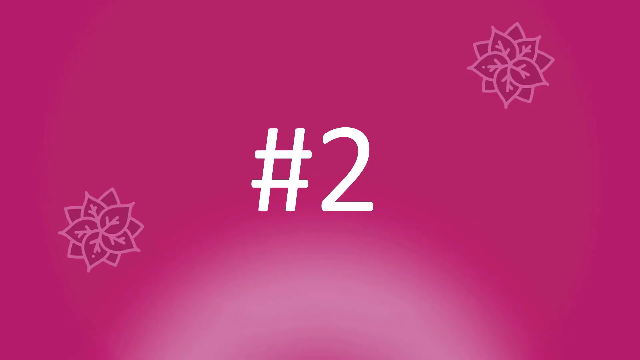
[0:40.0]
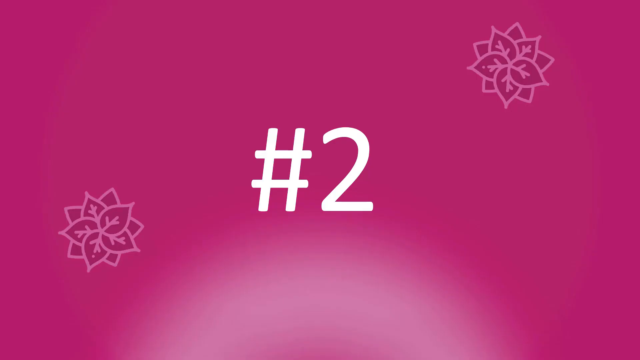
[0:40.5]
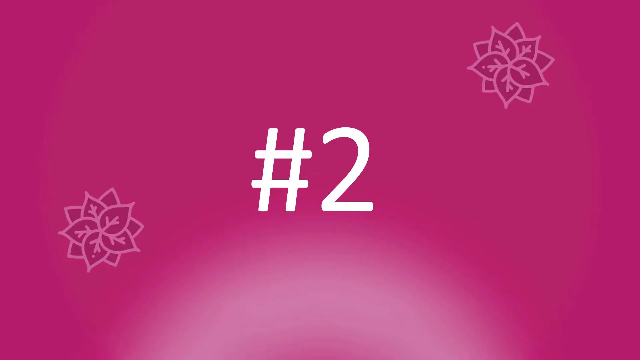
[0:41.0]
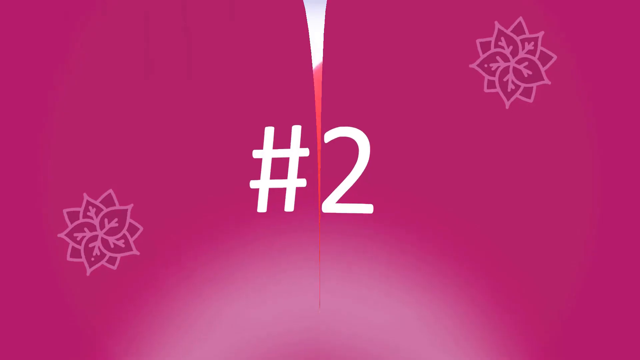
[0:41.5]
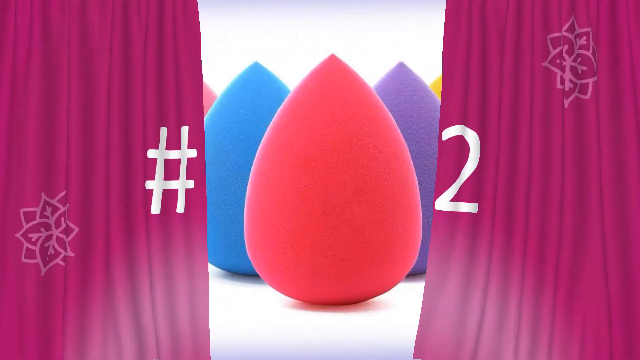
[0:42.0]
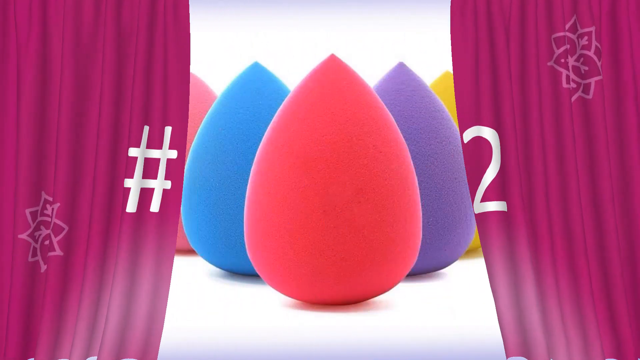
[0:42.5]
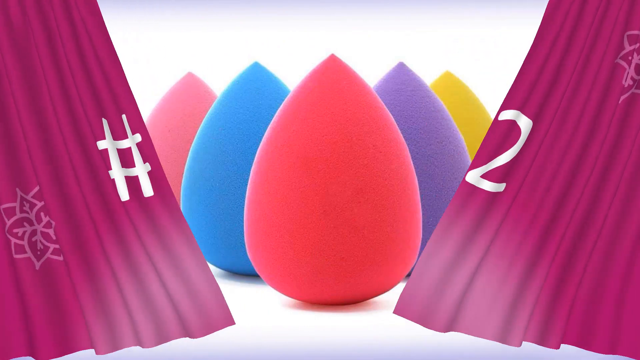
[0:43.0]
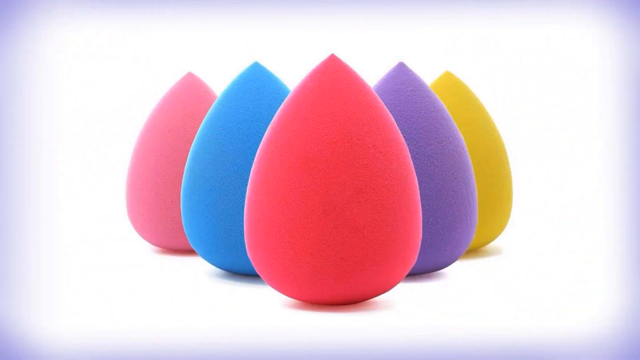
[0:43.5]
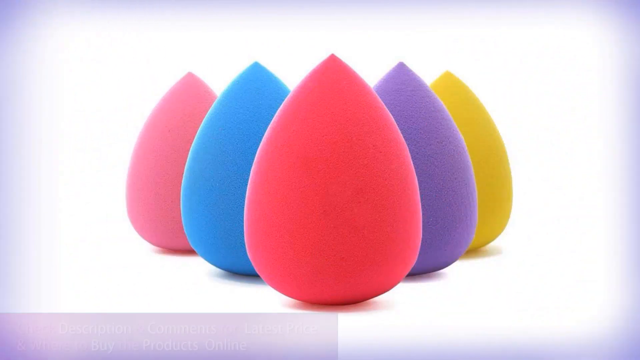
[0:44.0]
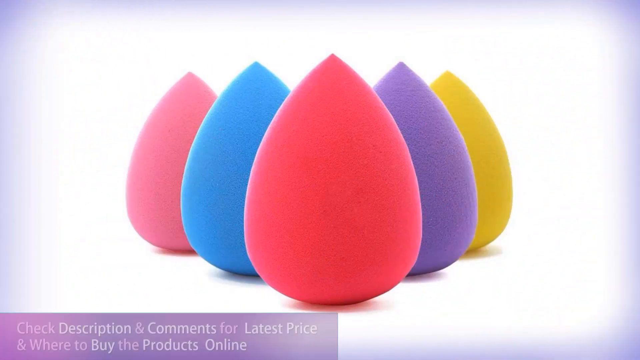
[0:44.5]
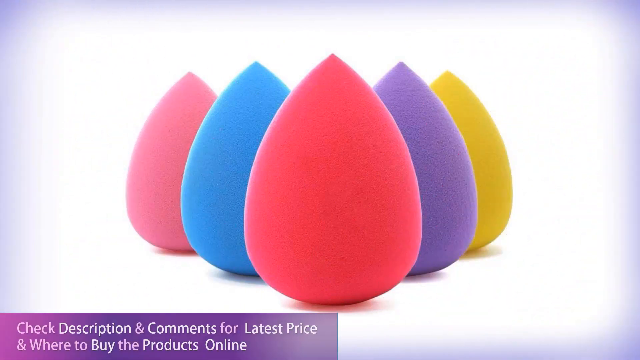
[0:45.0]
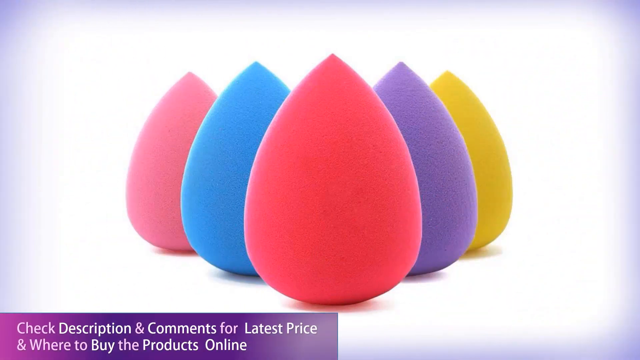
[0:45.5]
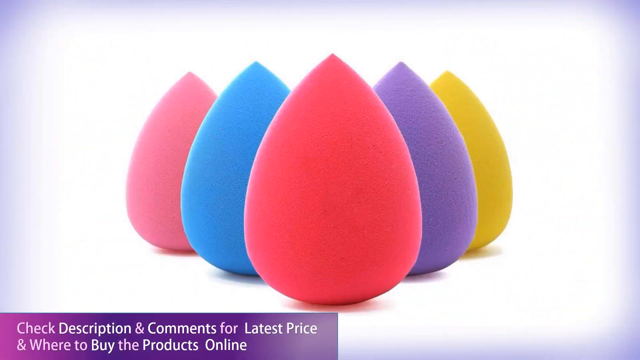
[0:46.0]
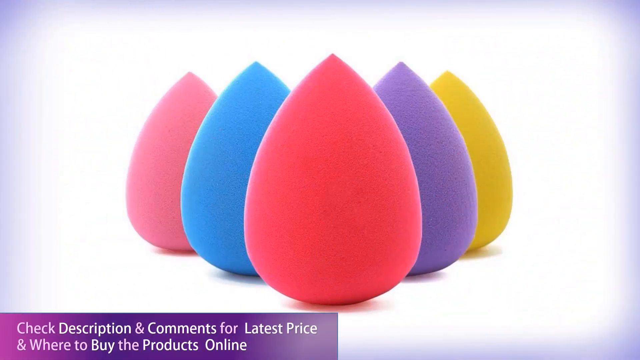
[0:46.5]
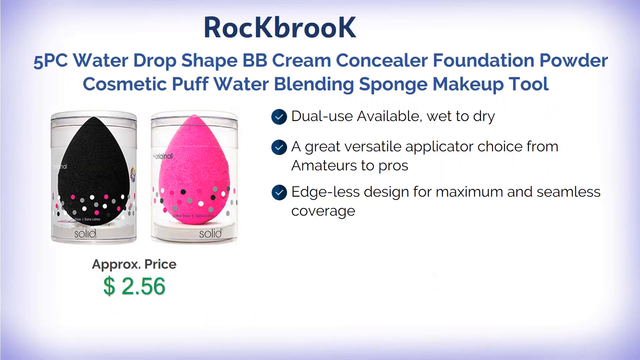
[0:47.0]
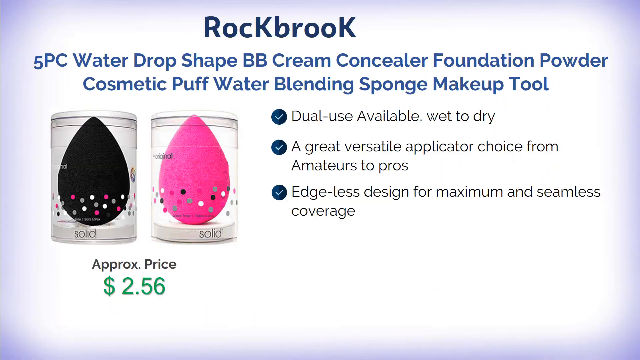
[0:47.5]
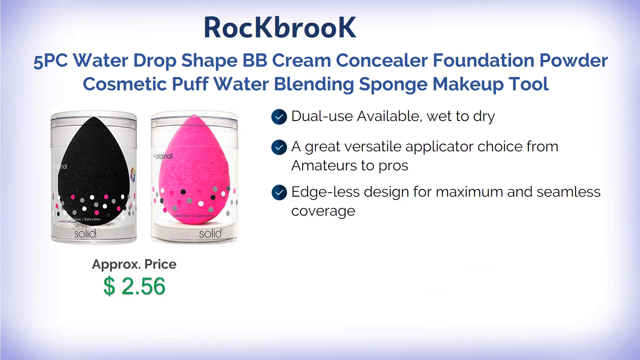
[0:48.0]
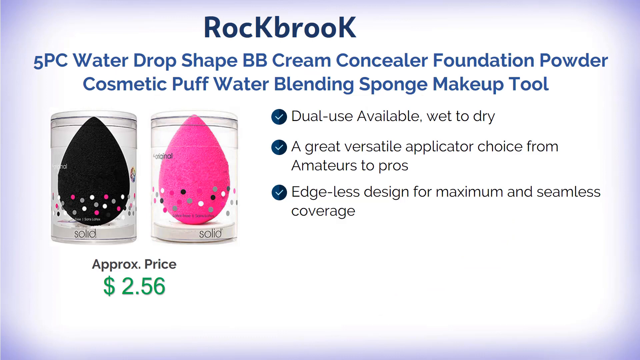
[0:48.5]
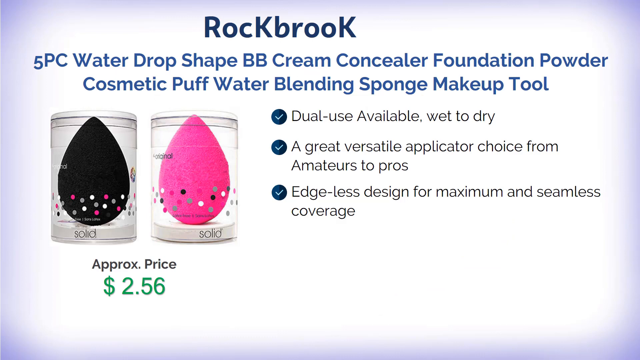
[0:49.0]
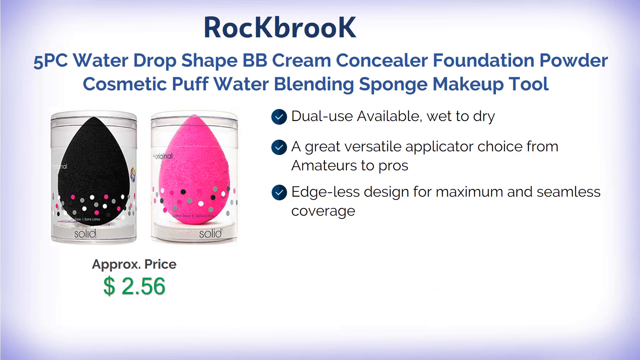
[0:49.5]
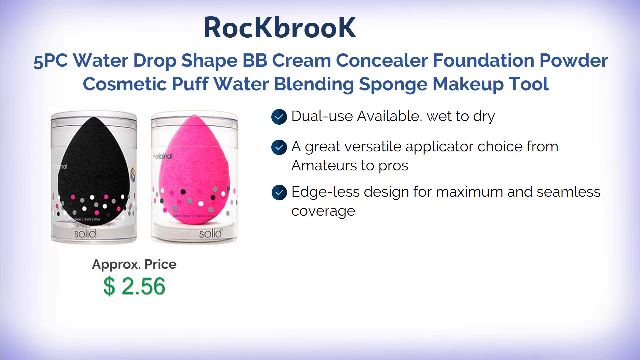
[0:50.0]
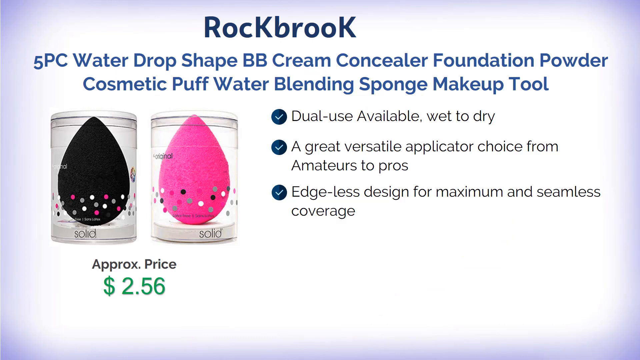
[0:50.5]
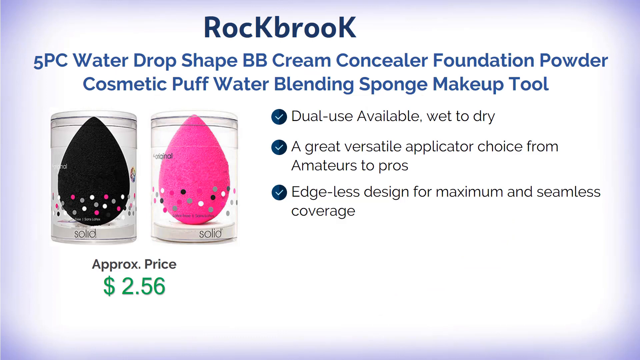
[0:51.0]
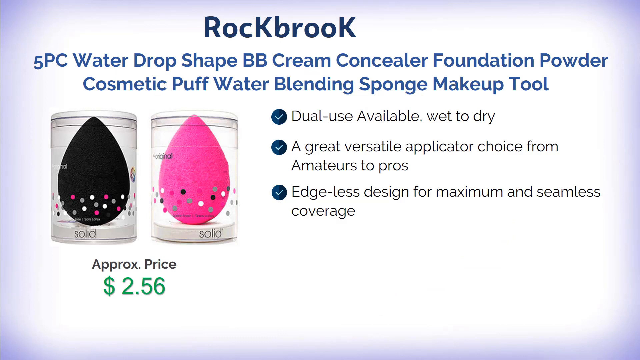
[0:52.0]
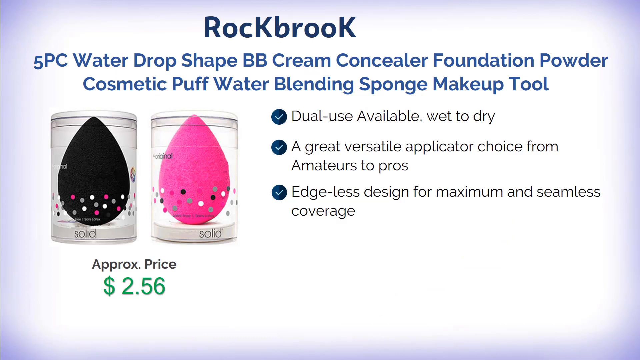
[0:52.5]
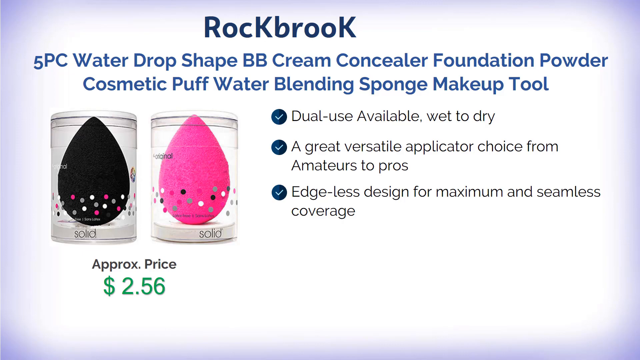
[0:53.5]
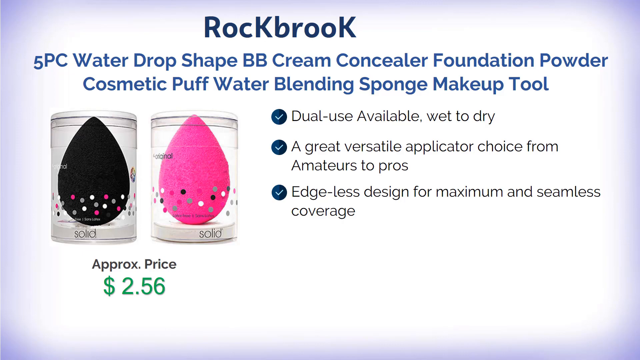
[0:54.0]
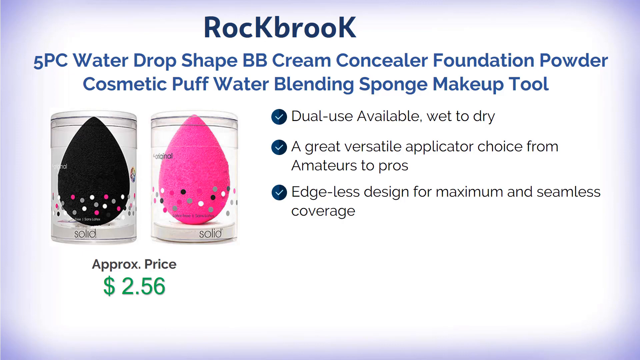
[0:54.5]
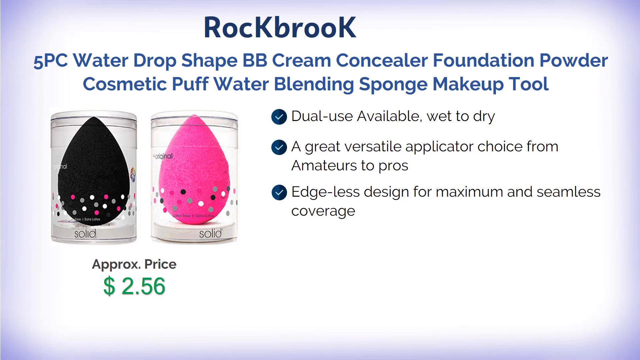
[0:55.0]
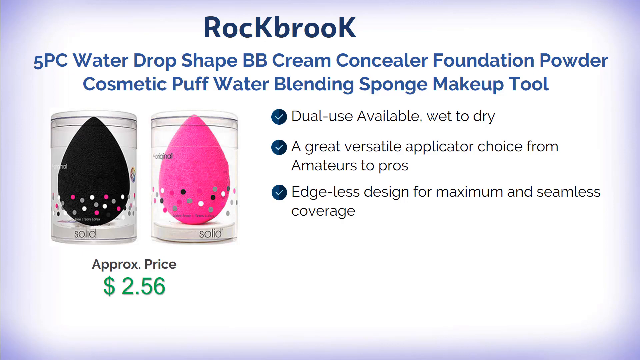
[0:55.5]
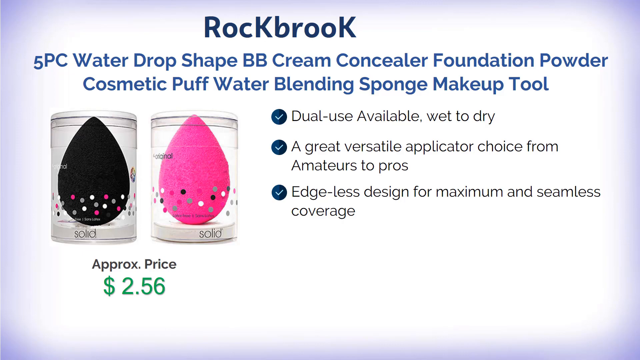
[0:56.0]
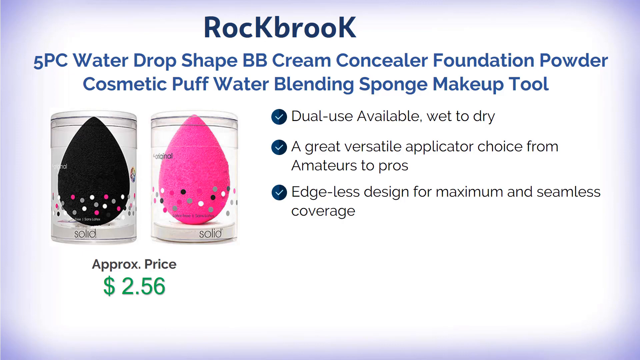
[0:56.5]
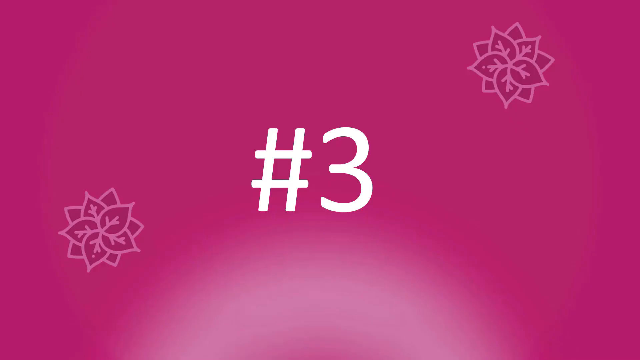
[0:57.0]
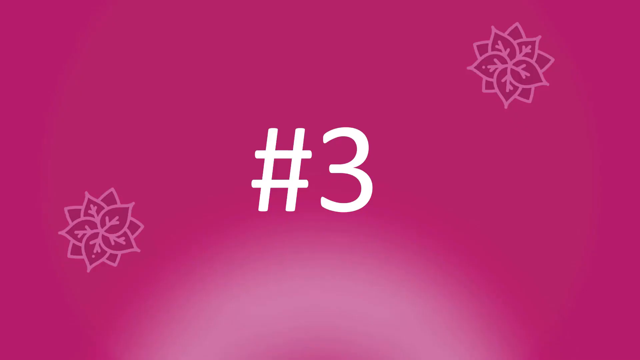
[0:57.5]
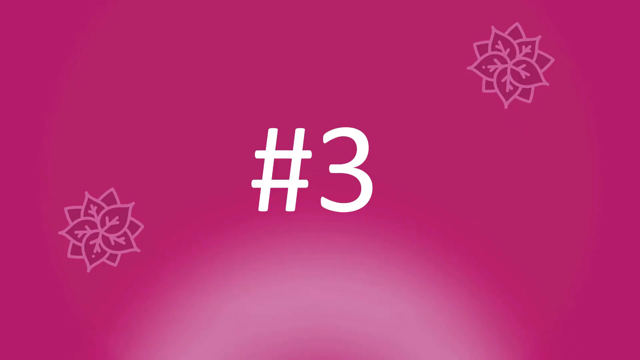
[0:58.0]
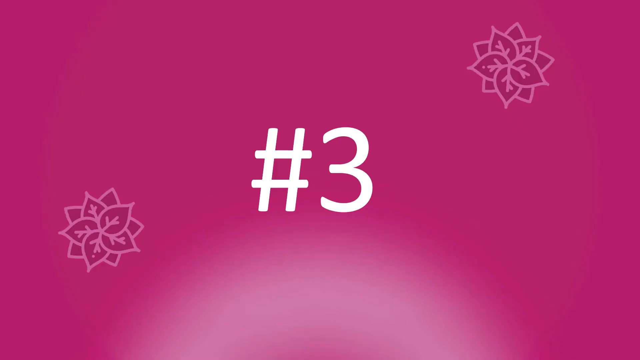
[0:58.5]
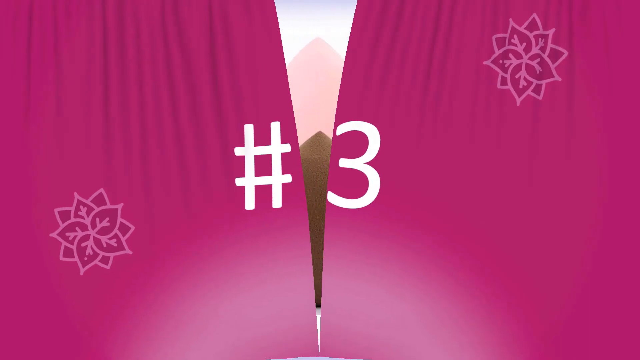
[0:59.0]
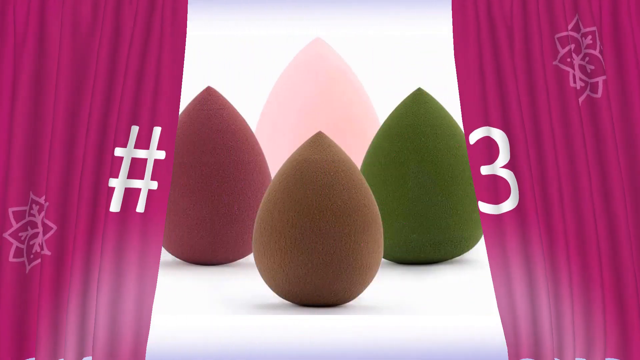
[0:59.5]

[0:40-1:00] A pink or indigo background shows a white pound sign and a number two in the center, with two little pink flowers around the number in the bottom left and top right corners. The background turns into a curtain-like graphic that splits apart and disappears. A white background then shows five teardrop-shaped objects which, from left to right, are pink, blue, more of a red, purple, and yellow. In the bottom left corner, a purple rectangle with white text reads "check description and comments for latest price and where to buy the products online". The scene changes to another white background with dark blue text at the top reading "ROCKBROOK", and below it, in regular blue text, "Five Piece Water Drop Shape BB Cream Concealer Foundation Powder Cosmetic Puff Water Blending Sponge Makeup Tool".